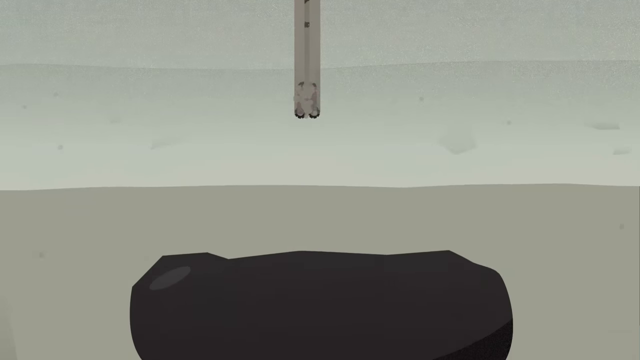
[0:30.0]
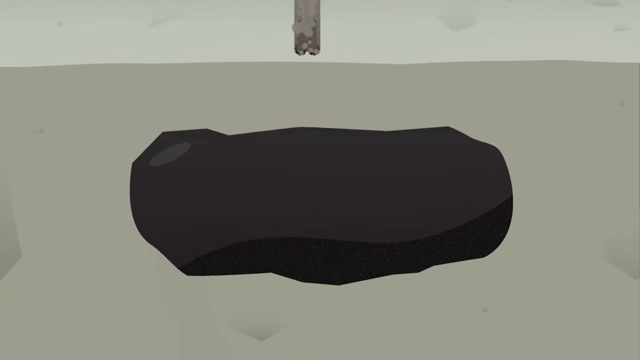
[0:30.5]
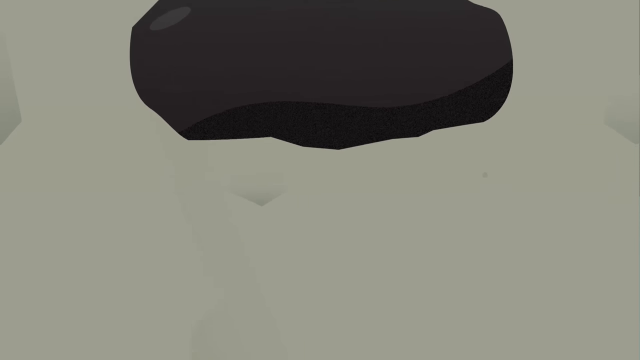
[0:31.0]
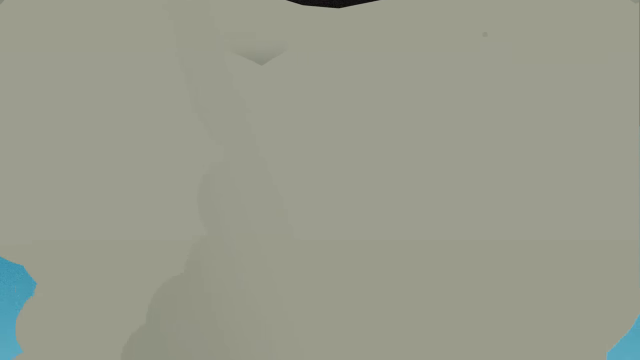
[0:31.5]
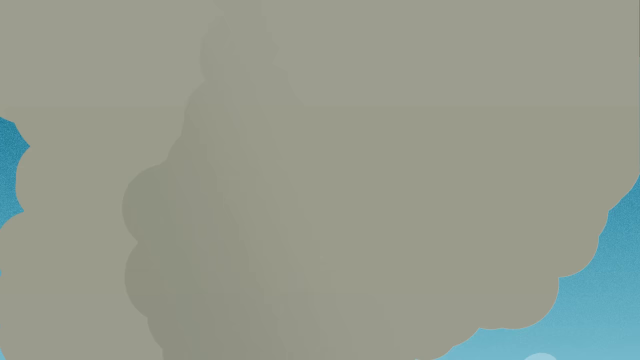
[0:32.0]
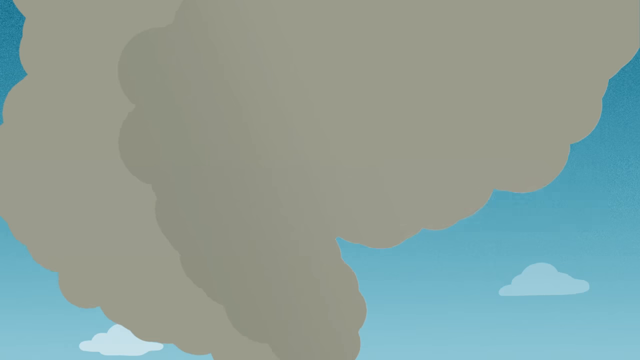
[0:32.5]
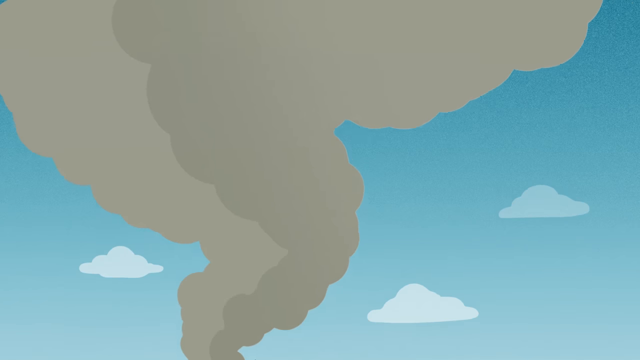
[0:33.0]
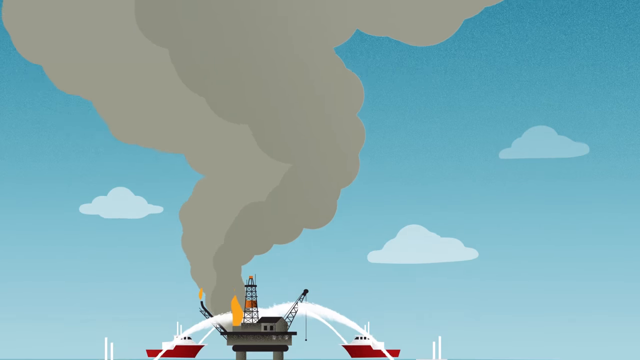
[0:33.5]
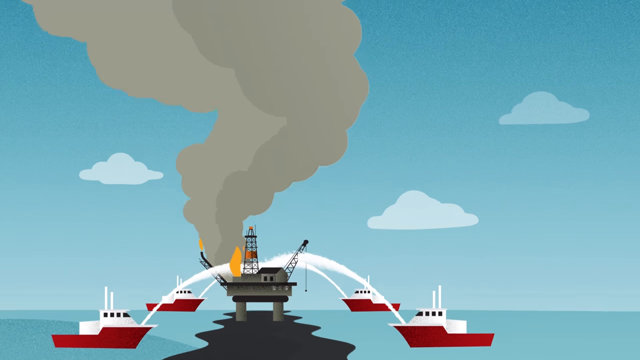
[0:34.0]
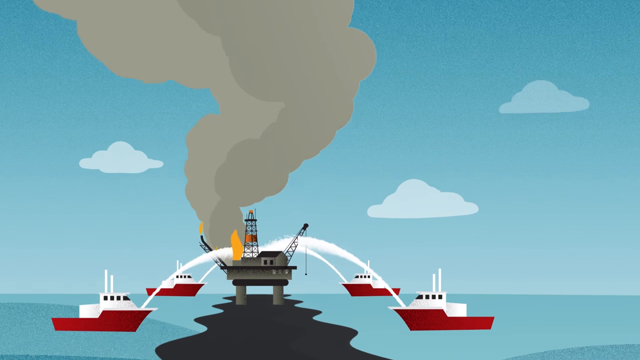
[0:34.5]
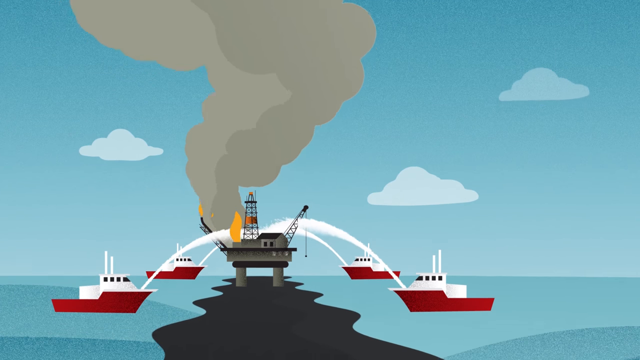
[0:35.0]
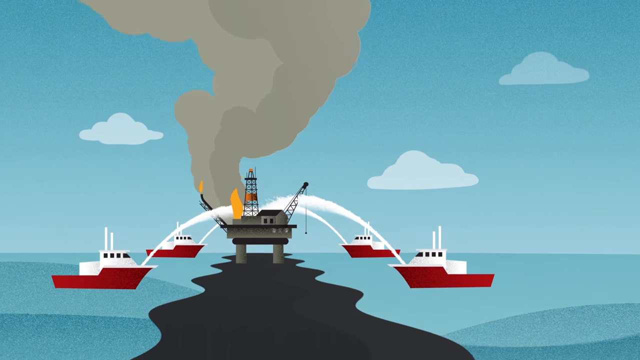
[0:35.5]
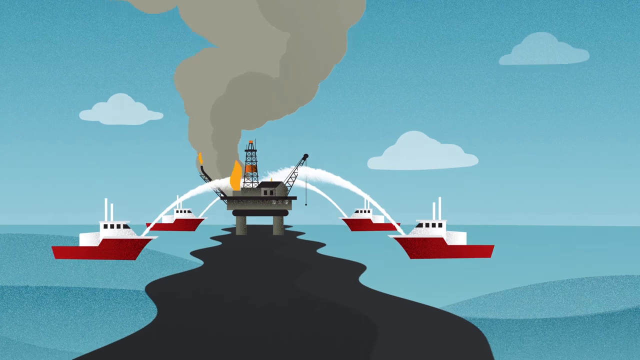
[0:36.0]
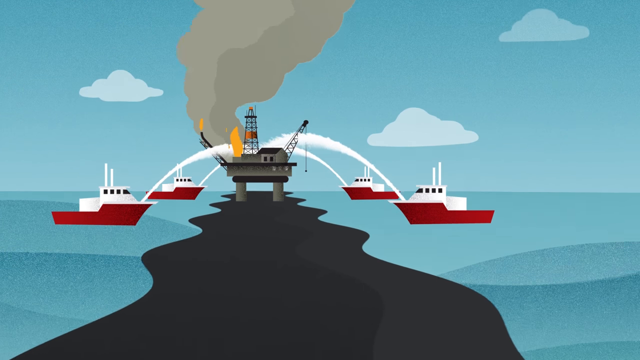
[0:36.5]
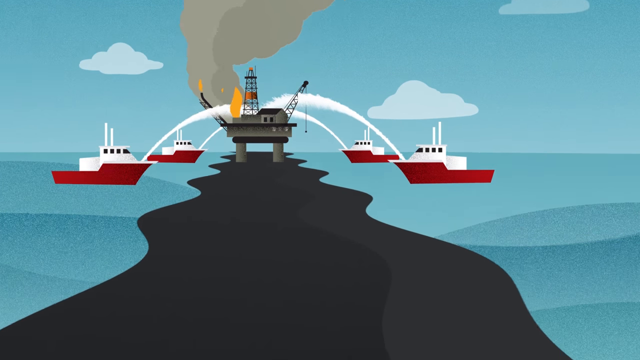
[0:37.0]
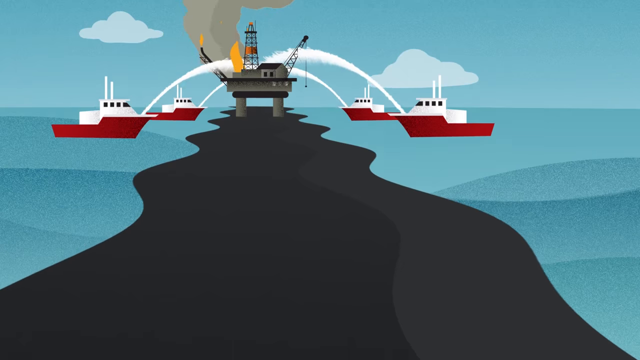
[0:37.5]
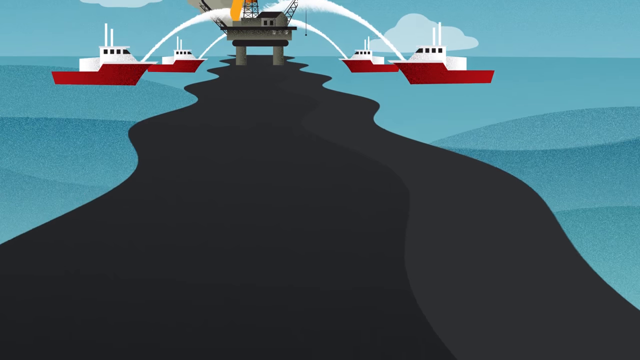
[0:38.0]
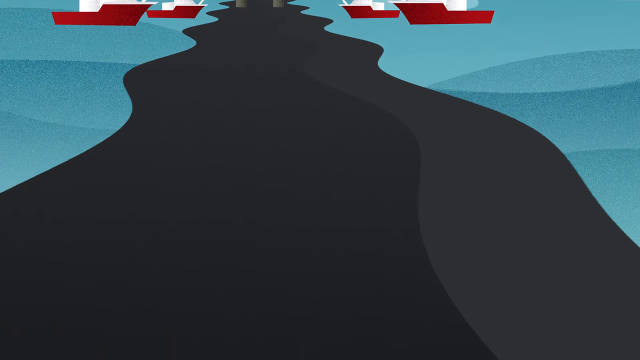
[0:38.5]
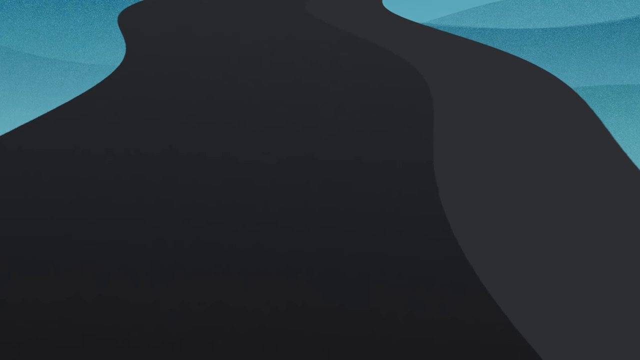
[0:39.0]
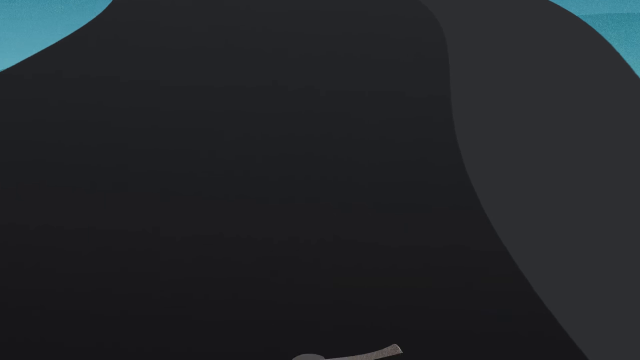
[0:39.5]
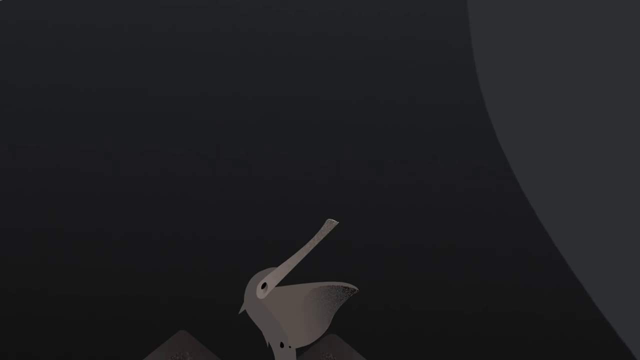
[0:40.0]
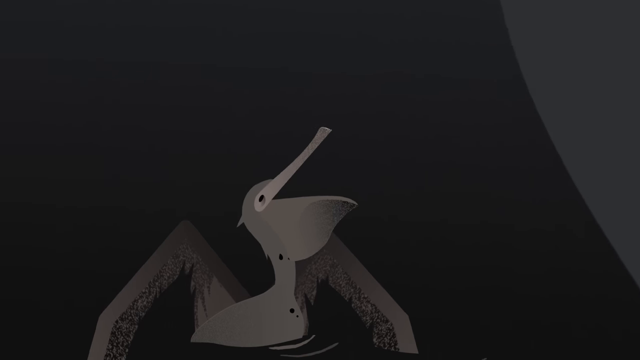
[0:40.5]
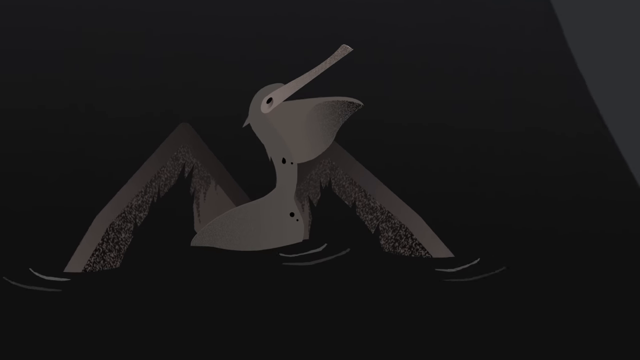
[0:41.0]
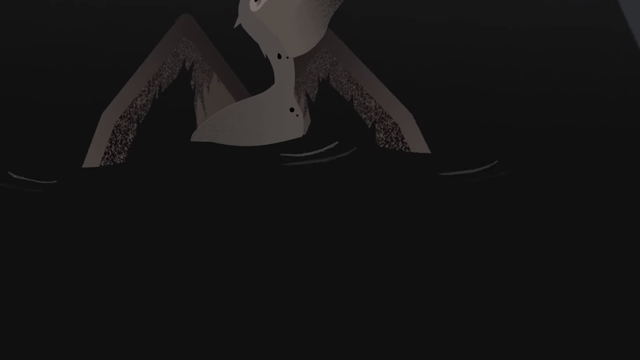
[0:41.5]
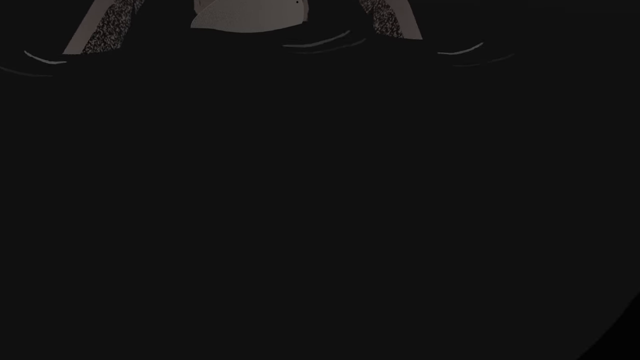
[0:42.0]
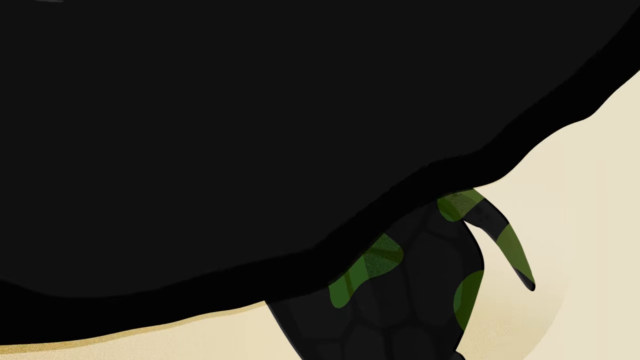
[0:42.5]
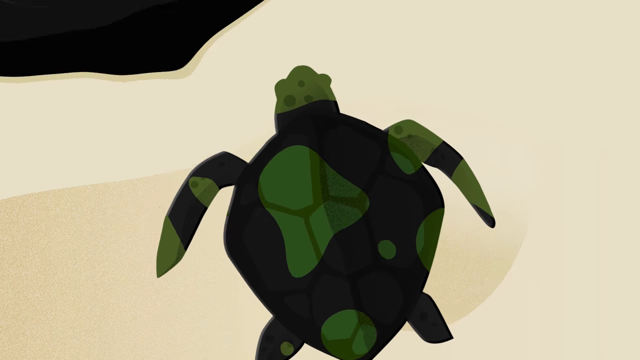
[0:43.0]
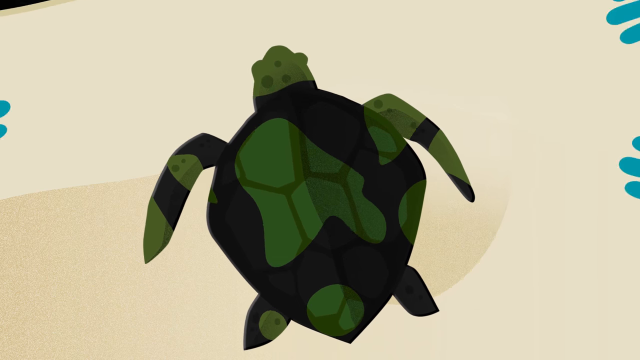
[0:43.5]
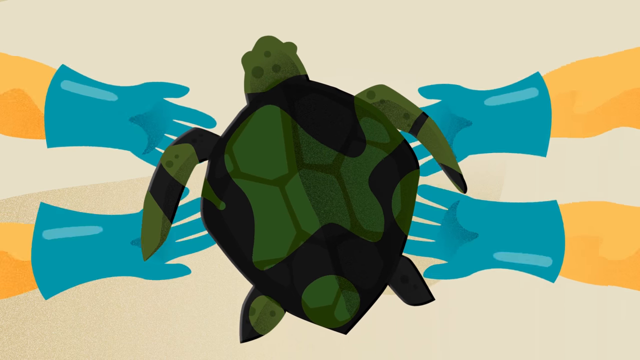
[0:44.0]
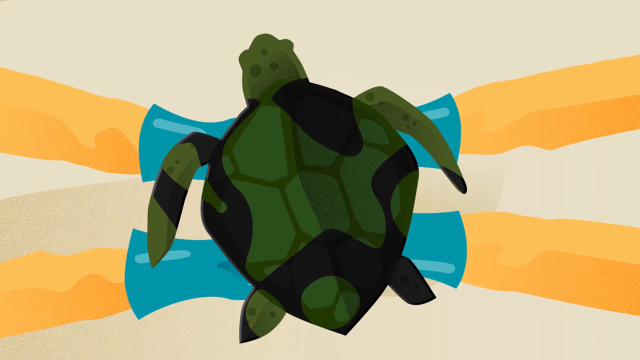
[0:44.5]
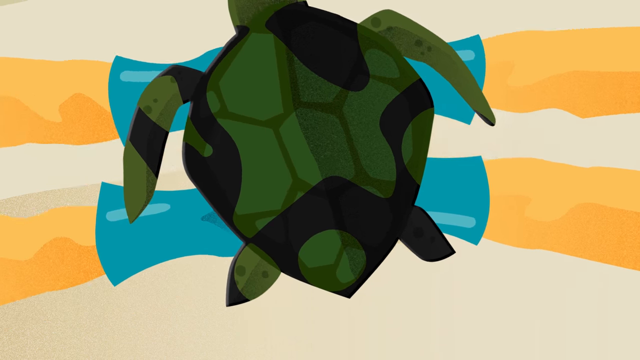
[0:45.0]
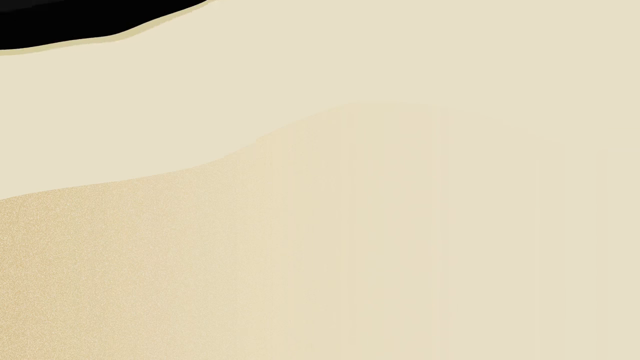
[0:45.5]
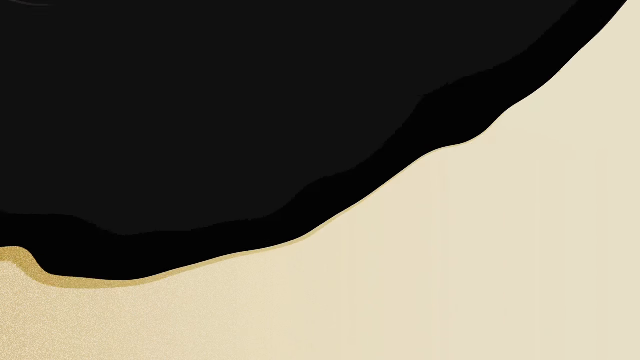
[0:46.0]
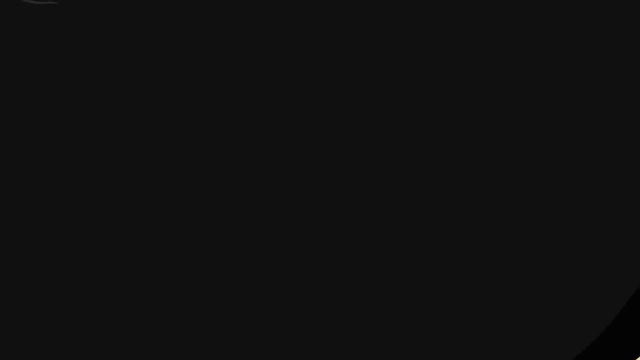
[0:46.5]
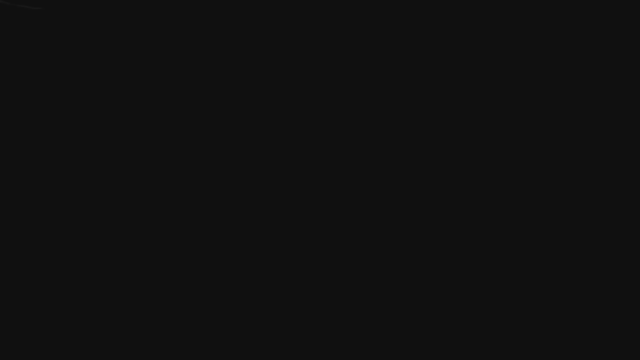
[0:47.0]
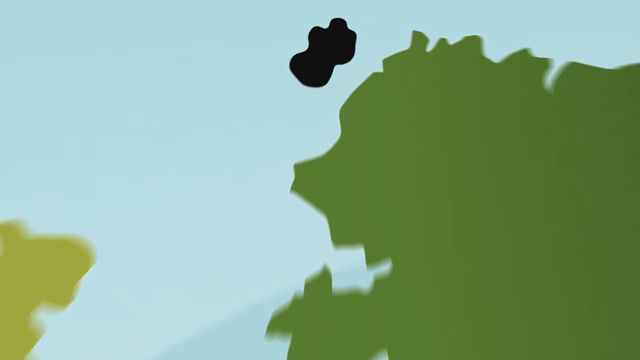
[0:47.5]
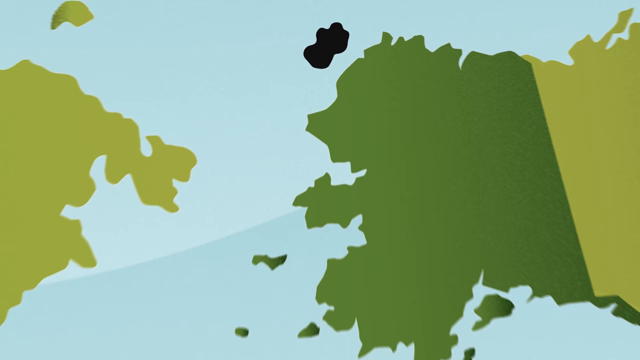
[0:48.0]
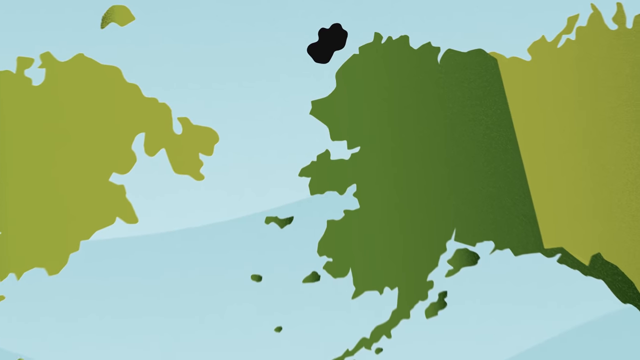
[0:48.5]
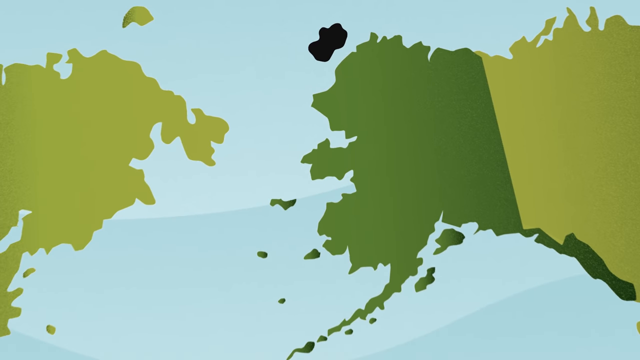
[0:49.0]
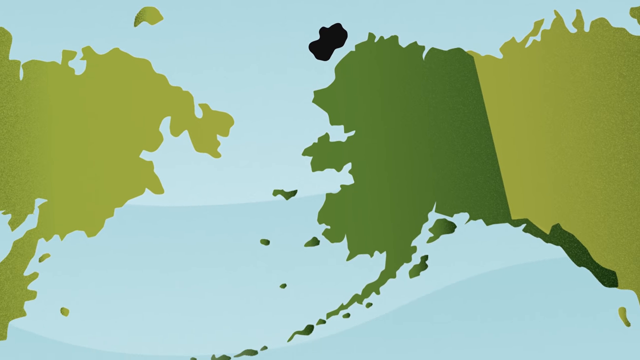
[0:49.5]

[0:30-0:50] The colors of the cartoon change to dark, drab browns. The oil rigs drop a weighted piece of equipment into the brown sand, and it continues down through layers of sand that grow progressively darker until it reaches a nearly black pit at the bottom. The camera continues to pan downward, but instead of the ocean, the brown sand turns into brown clouds issuing from smokestacks. The oil rig seen earlier emerges, now on fire, with the fire shooting from next to the building on the platform. In the ocean, four red and white ships all aim sprays from water hoses at the fire. In front of the oil rig and traveling out toward the viewer is a large black oil slick, showing that there has been an oil spill. Most of the ocean is still blue, but as the camera pans downward, the oil slick becomes darker and darker, and a sea turtle swims through it. Gloved hands pick up the sea turtle and take it away to be cleaned. Then a larger map pulls outward, showing the blue ocean with a big oil slick visible in it.